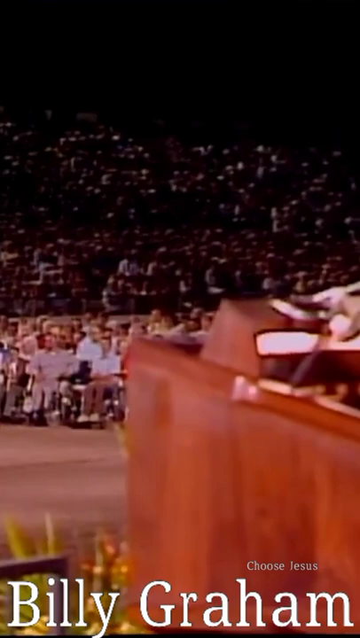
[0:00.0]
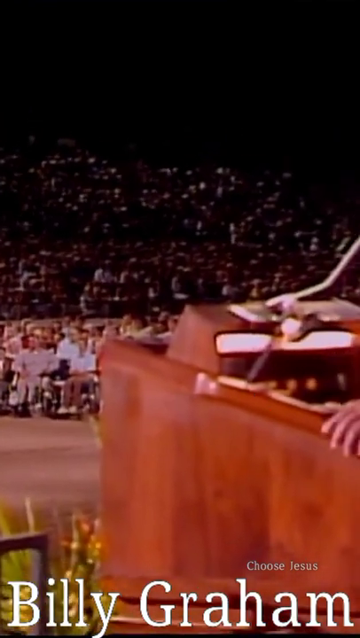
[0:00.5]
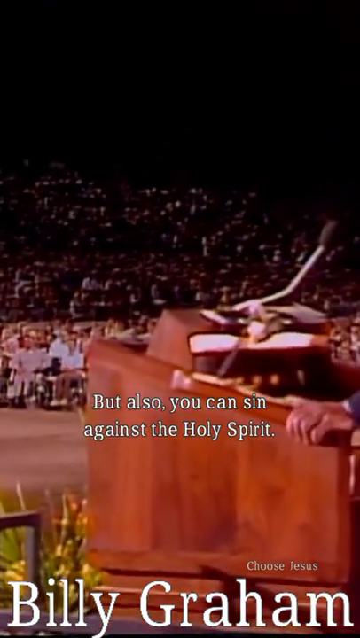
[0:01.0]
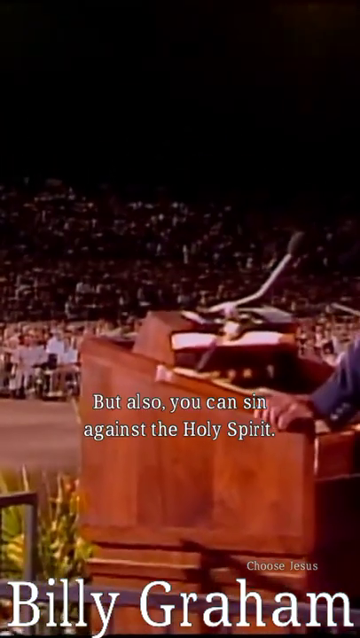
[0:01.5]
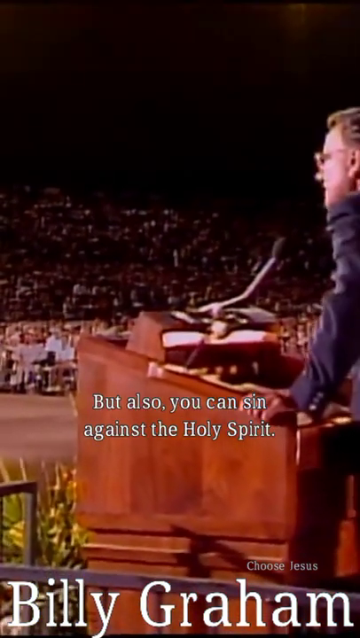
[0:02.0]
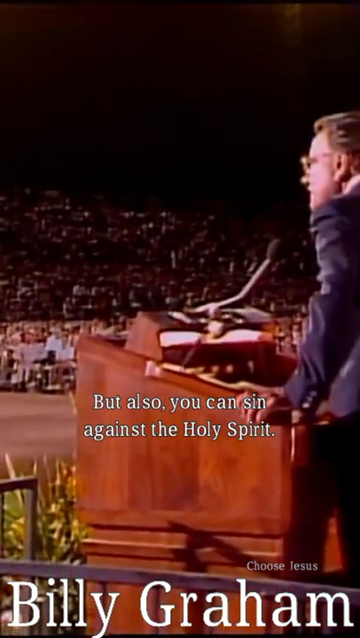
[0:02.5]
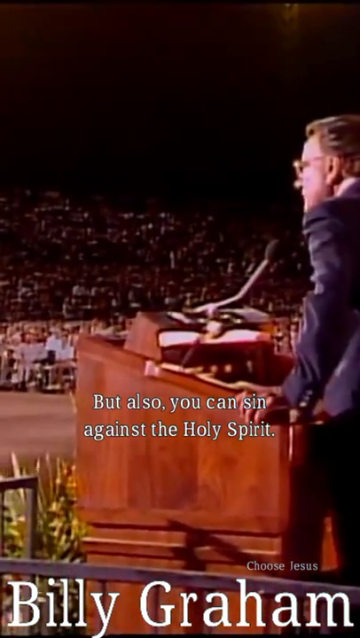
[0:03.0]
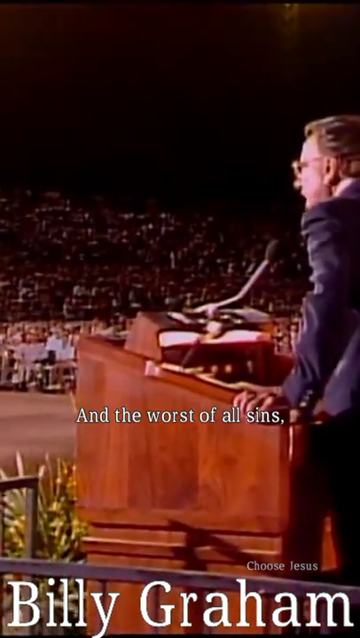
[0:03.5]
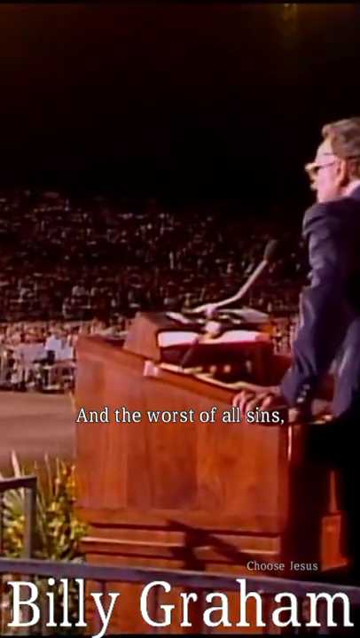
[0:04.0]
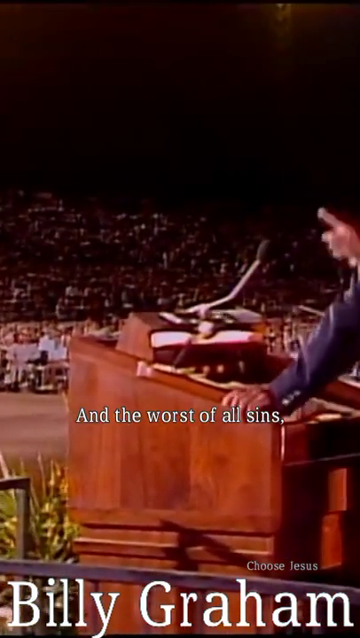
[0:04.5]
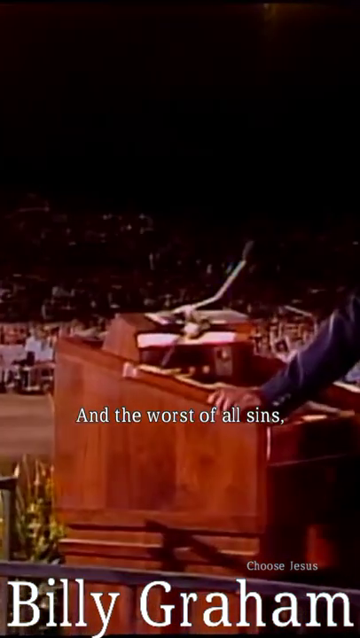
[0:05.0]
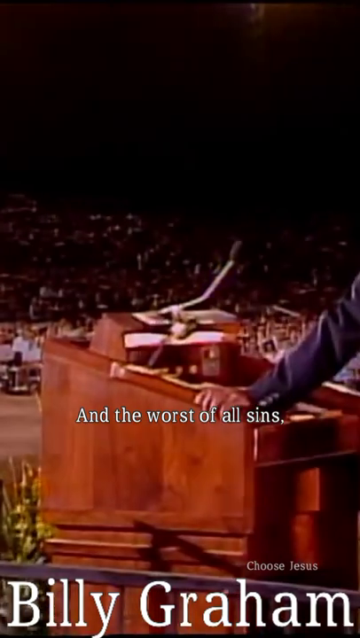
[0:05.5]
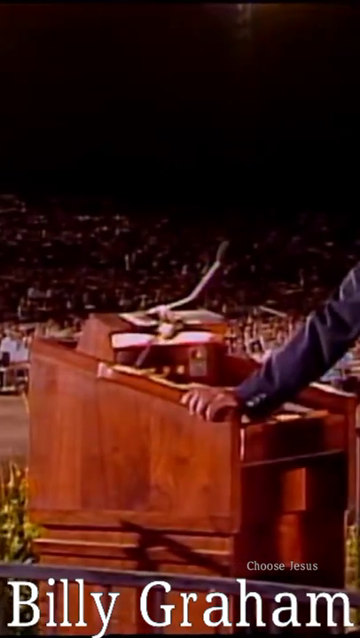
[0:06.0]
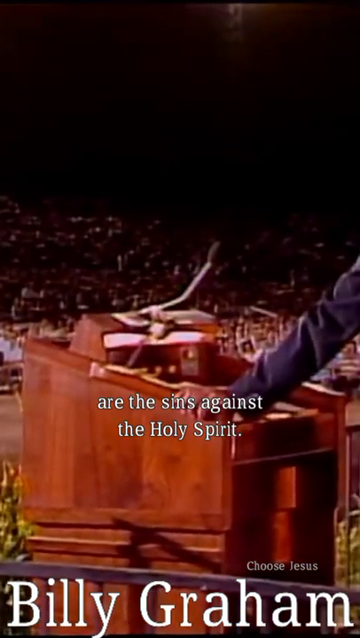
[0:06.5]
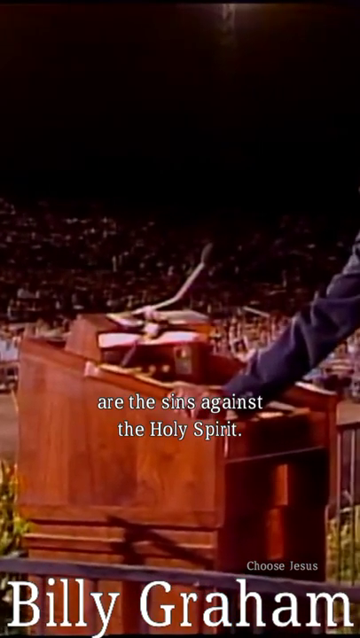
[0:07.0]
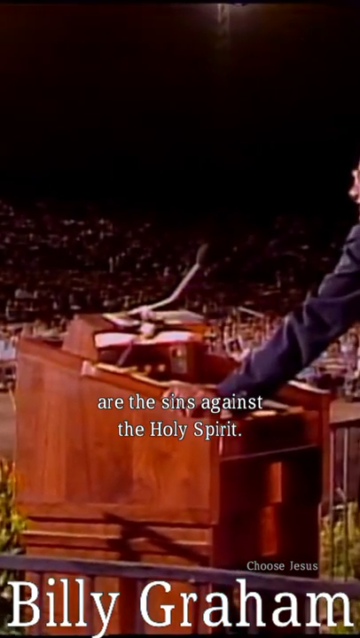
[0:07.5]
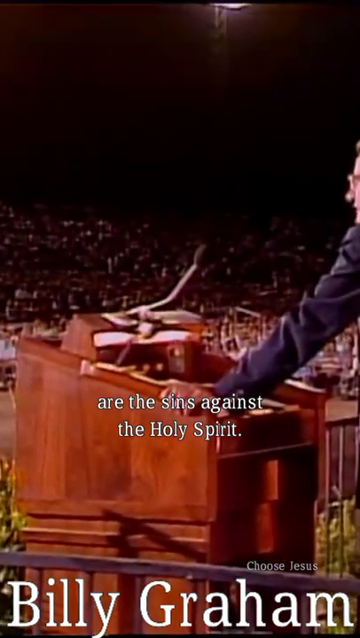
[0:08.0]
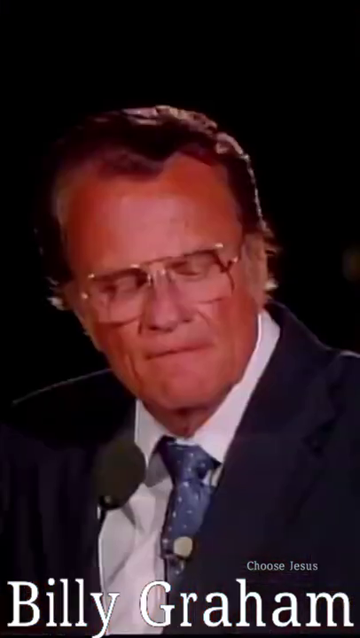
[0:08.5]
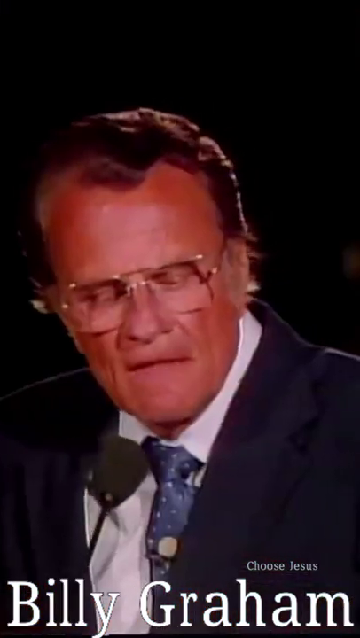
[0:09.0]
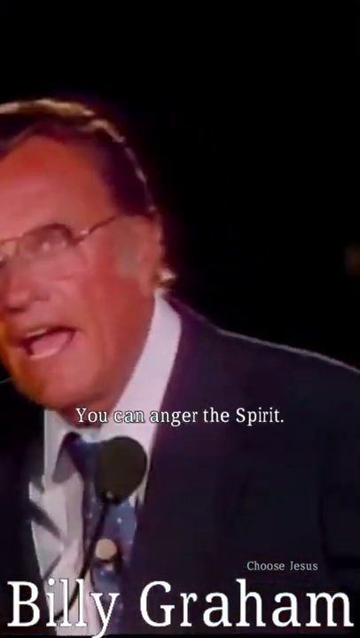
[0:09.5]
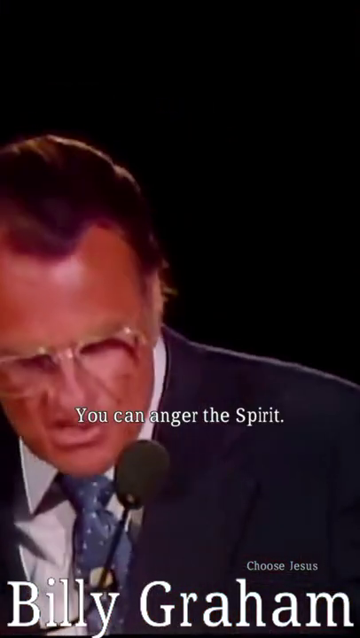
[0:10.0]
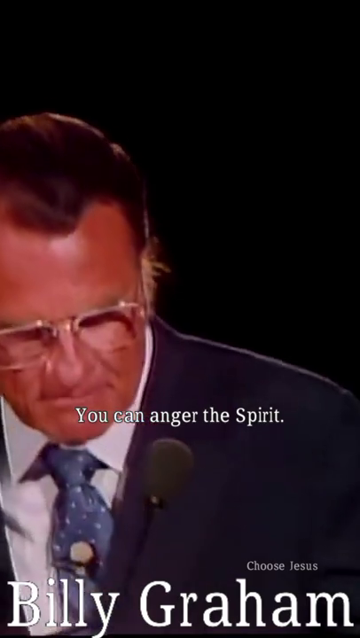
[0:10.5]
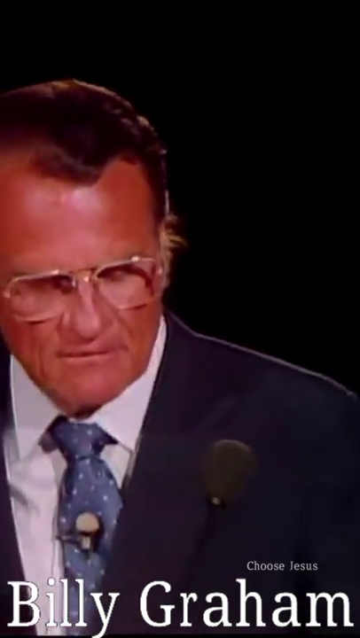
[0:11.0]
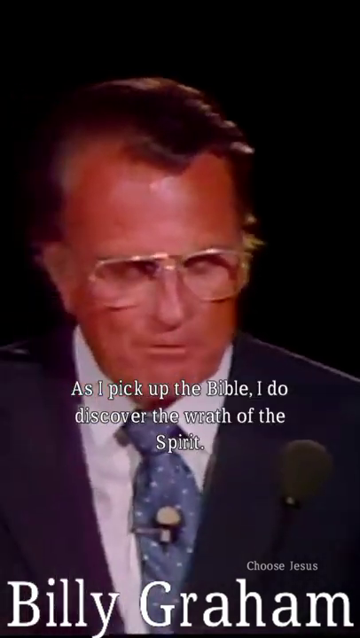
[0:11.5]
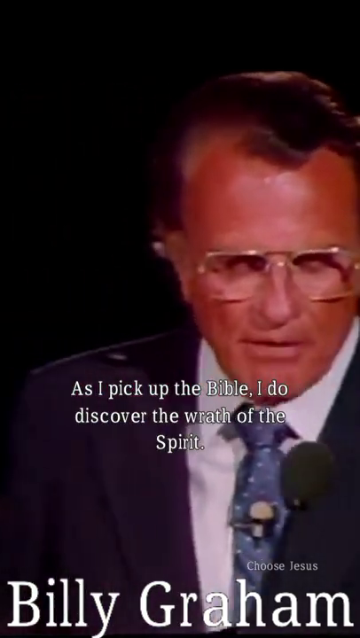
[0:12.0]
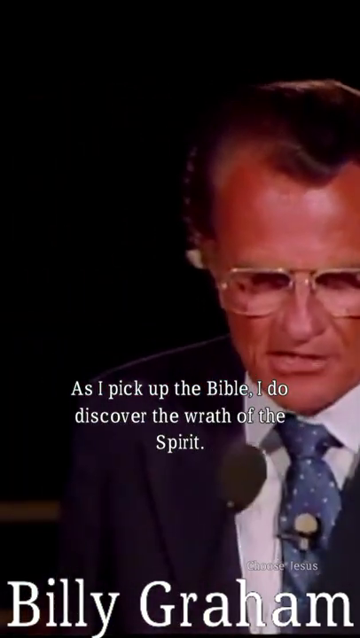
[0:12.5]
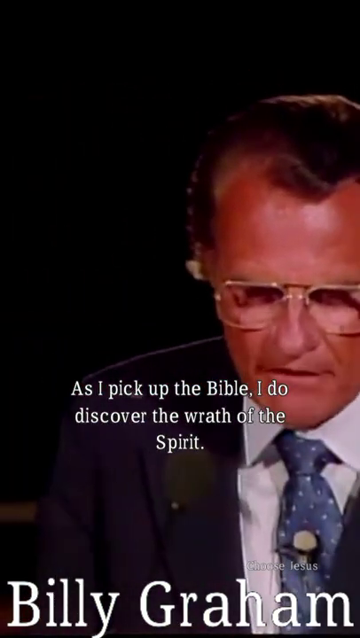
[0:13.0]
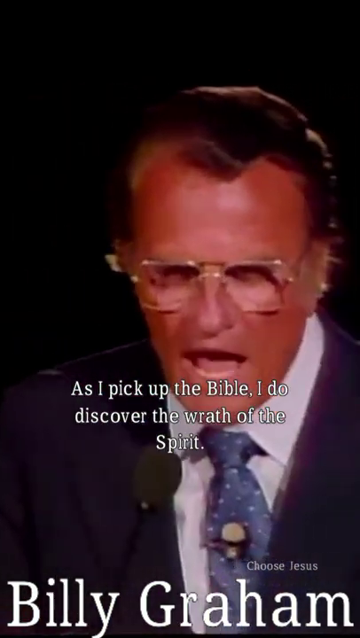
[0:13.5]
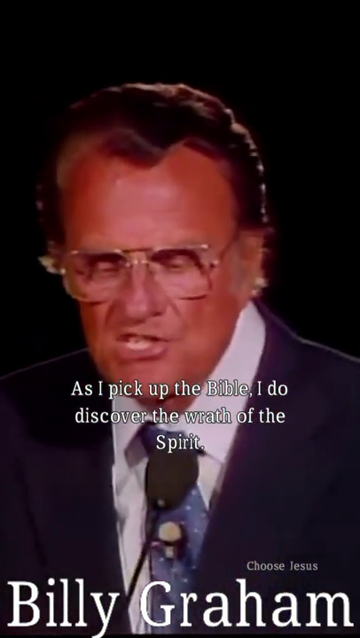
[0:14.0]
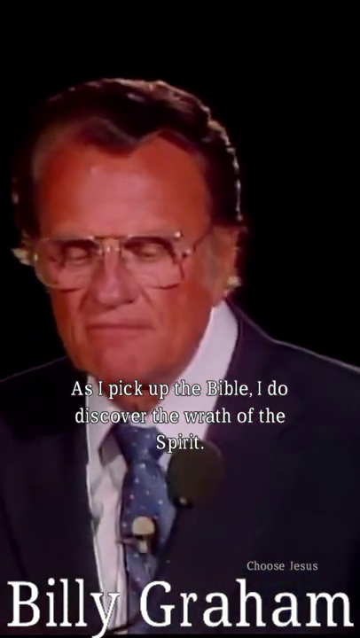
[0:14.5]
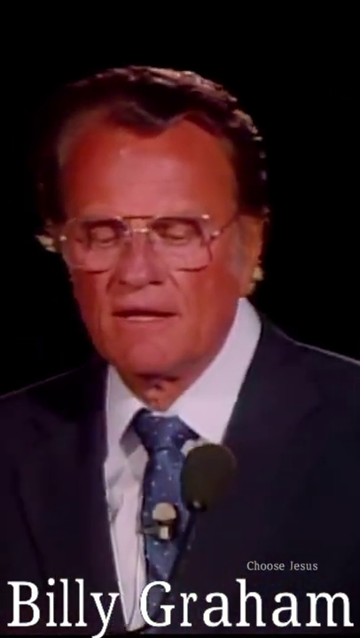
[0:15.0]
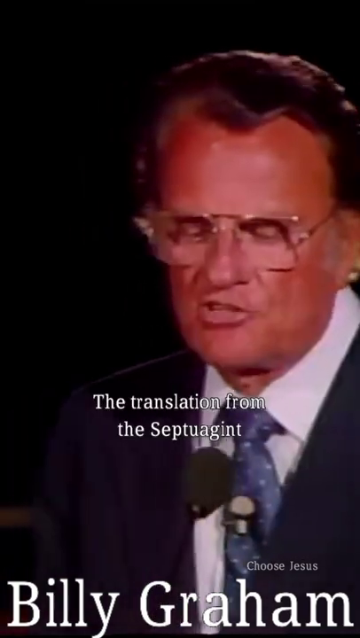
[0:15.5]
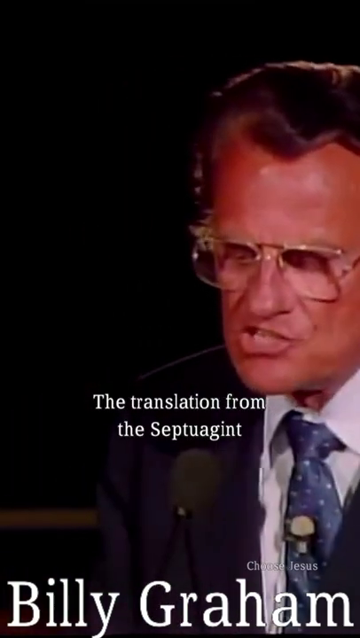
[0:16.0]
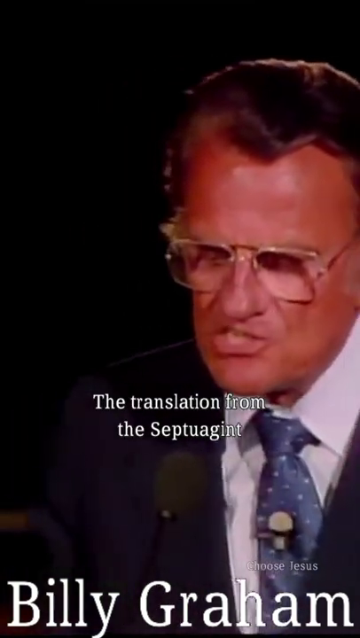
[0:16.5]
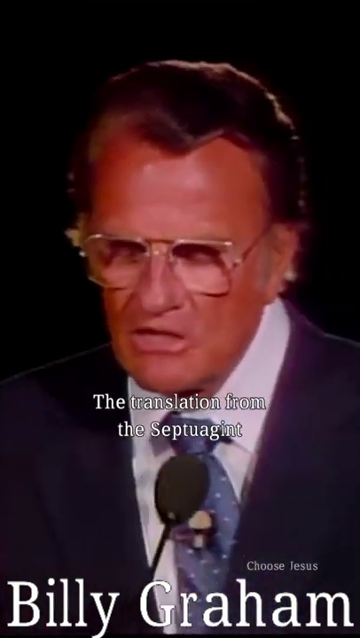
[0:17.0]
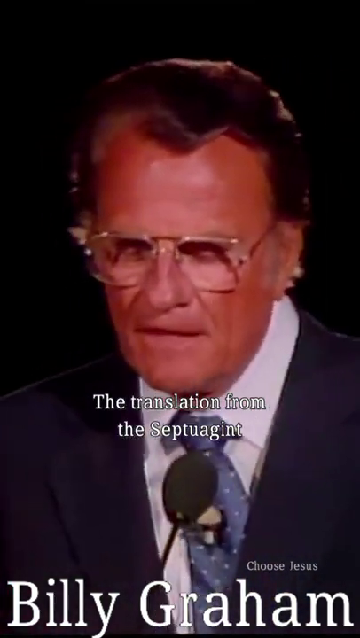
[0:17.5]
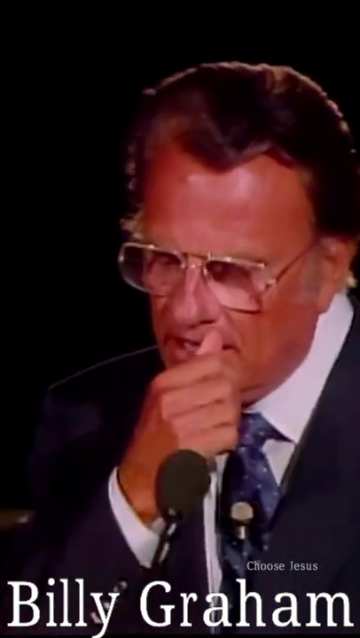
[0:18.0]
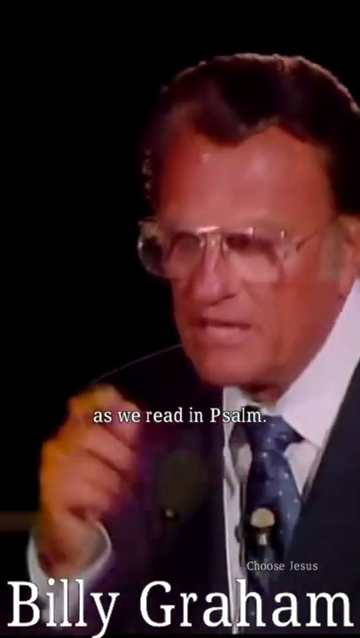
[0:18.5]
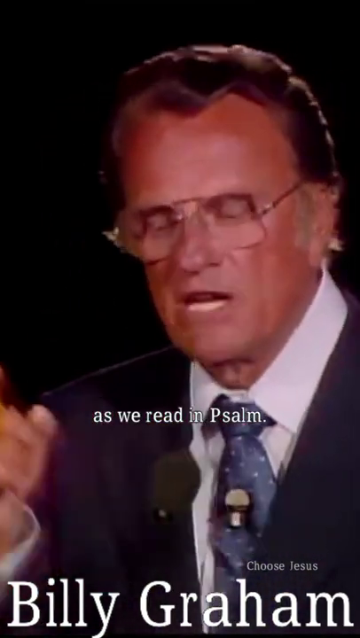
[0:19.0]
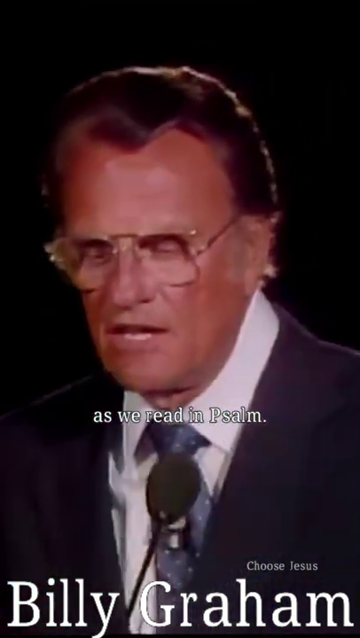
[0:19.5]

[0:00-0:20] This appears to be old footage of a sermon. At the bottom of the frame, "Billy Graham" appears in large white text, and above that, on the bottom right, "choose Jesus" is also in white text. Billy Graham, the preacher, is at a podium as the camera starts zooming back, and his words are displayed as subtitles in the center of the frame. The pastor is seen from the back as he stands at the podium. A microphone extends from the top of the podium in front of him, with a black circle at its end. He wears a blue suit and glasses, and his hair is slicked back. A rather large audience comes into view, with some congregants in wheelchairs in the front row, in what almost looks like a stadium setting. Then Billy Graham is shown facing front from the chest up; as he speaks he looks down and speaks into the camera or the microphone.